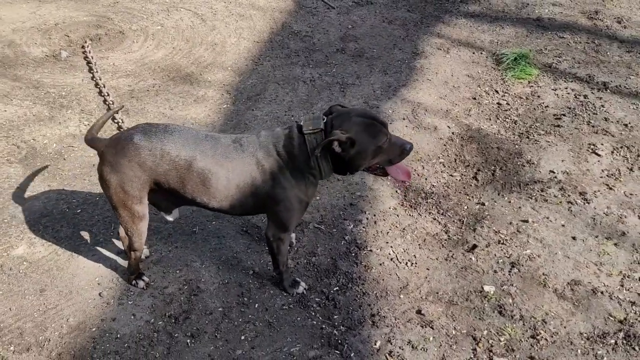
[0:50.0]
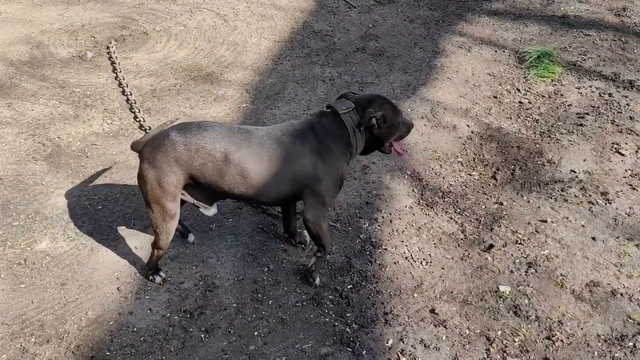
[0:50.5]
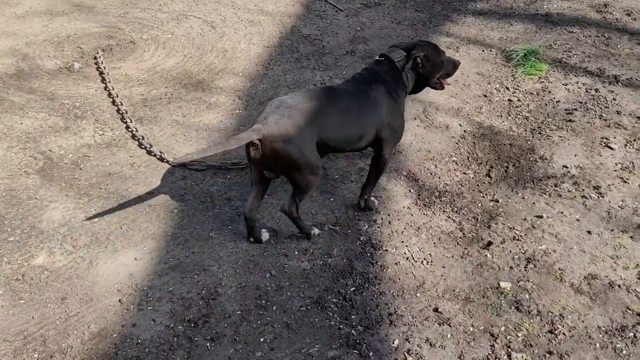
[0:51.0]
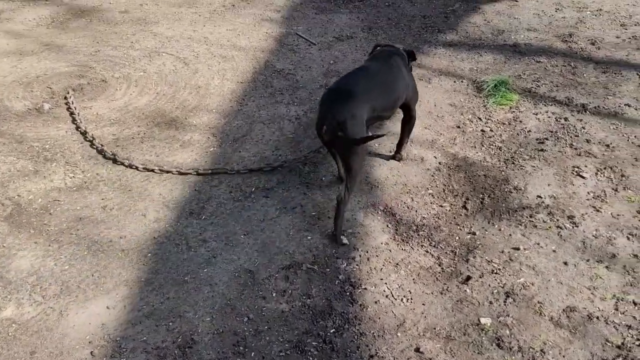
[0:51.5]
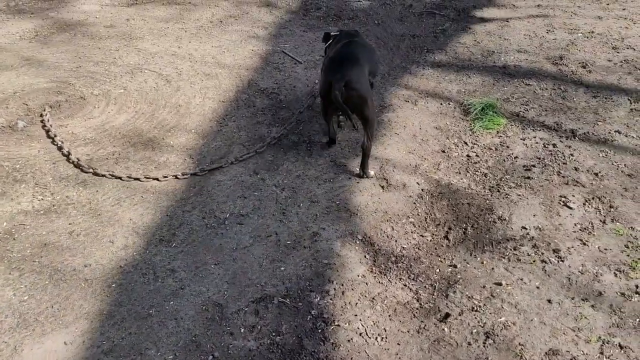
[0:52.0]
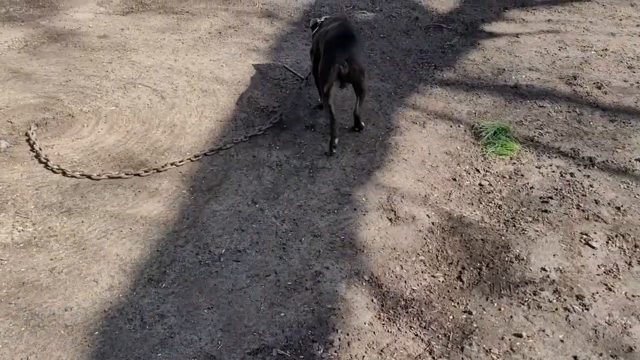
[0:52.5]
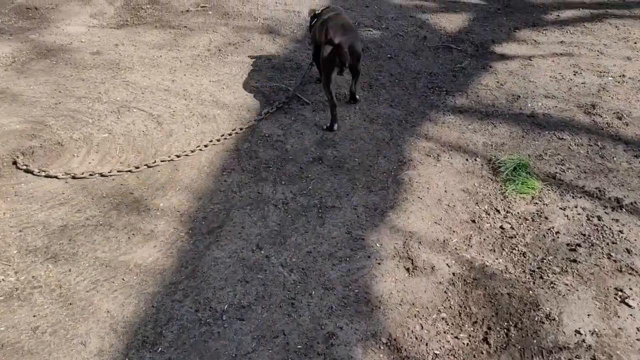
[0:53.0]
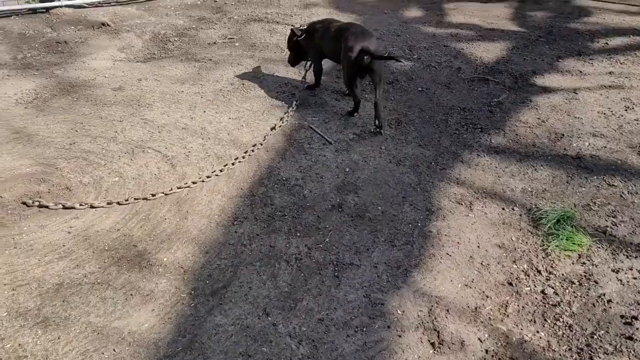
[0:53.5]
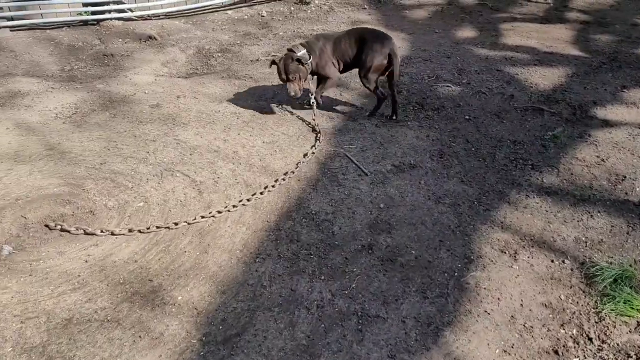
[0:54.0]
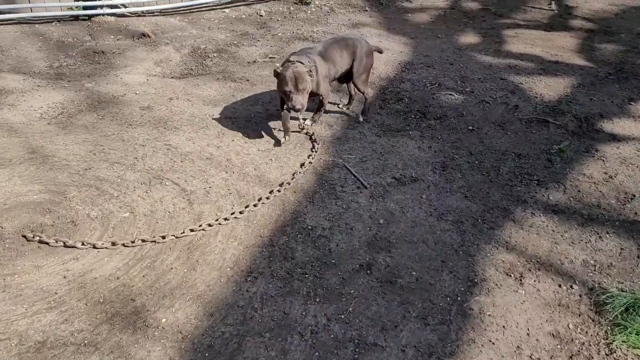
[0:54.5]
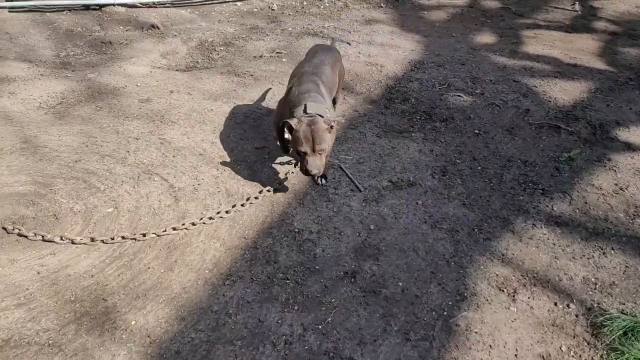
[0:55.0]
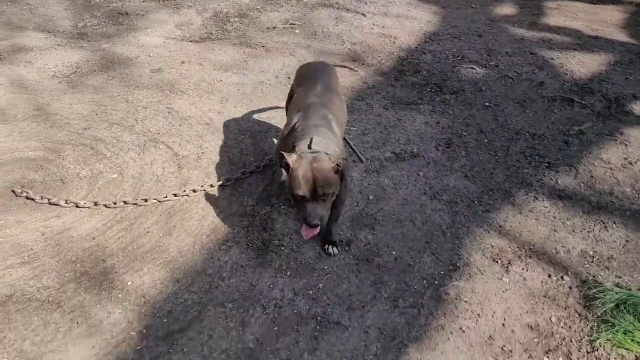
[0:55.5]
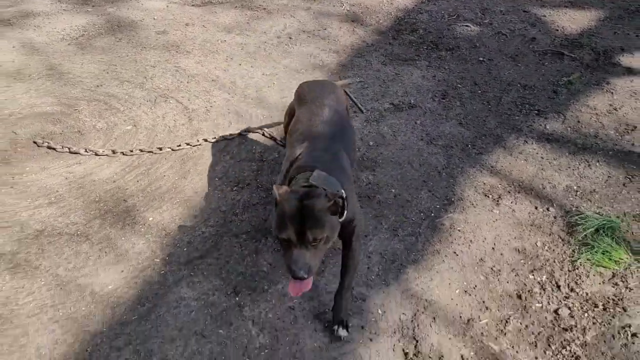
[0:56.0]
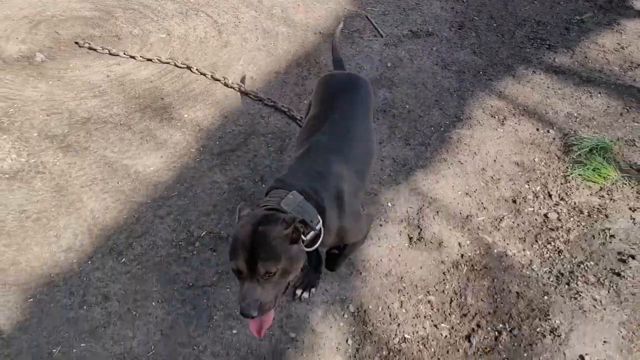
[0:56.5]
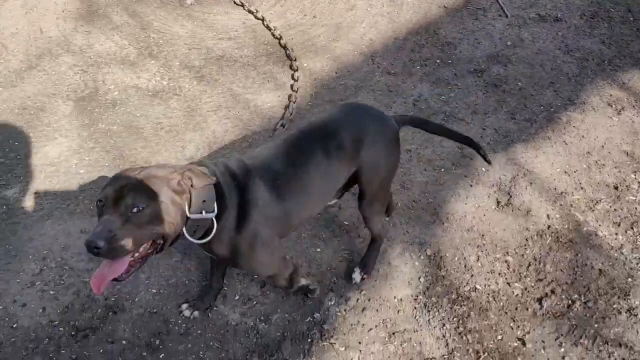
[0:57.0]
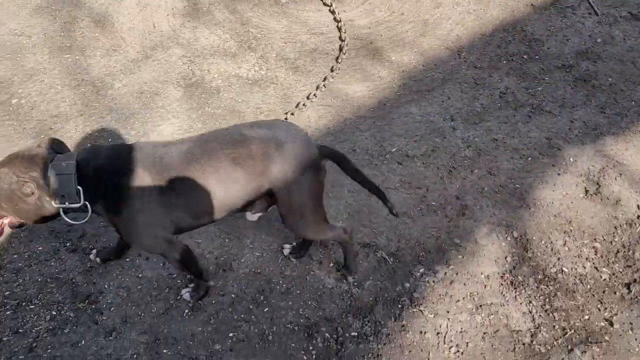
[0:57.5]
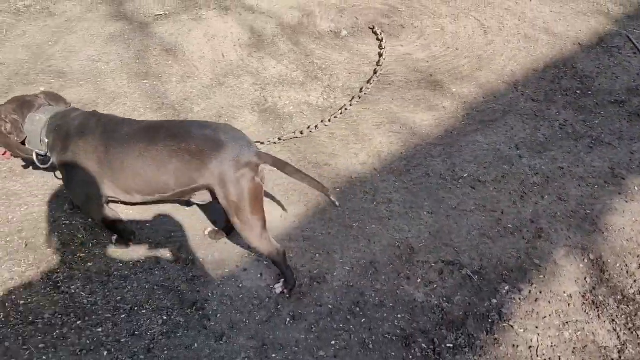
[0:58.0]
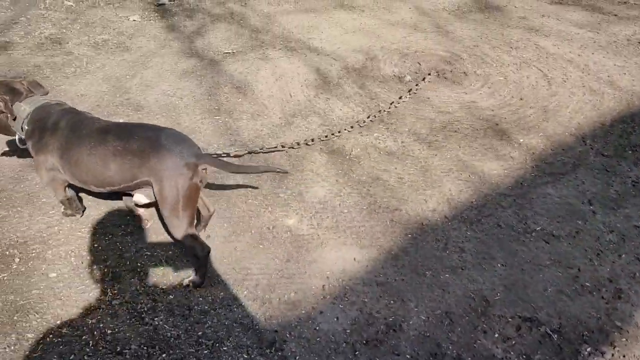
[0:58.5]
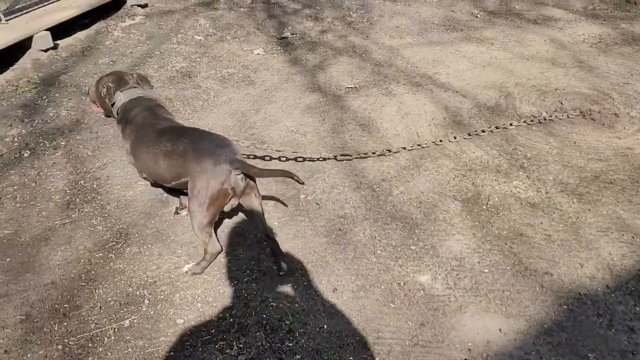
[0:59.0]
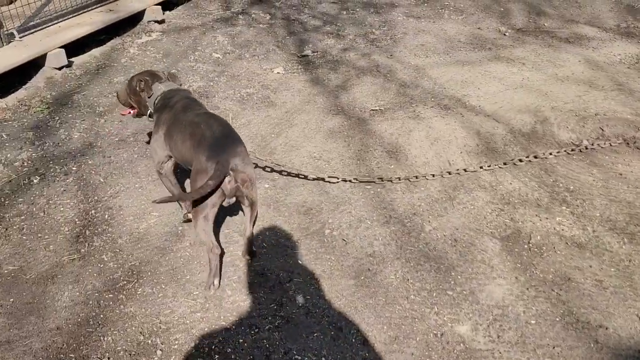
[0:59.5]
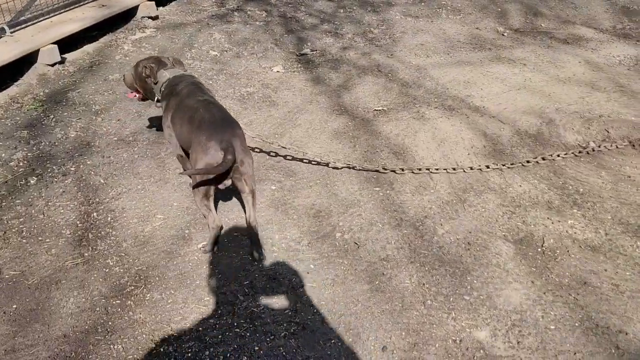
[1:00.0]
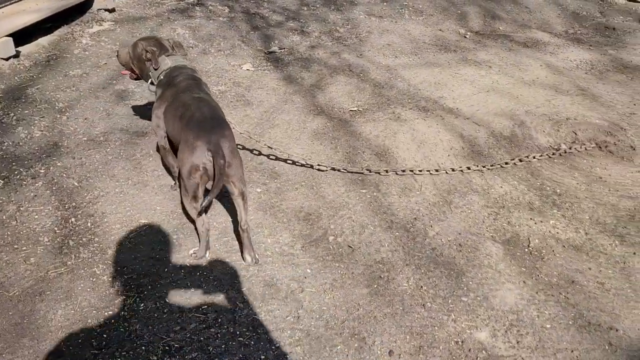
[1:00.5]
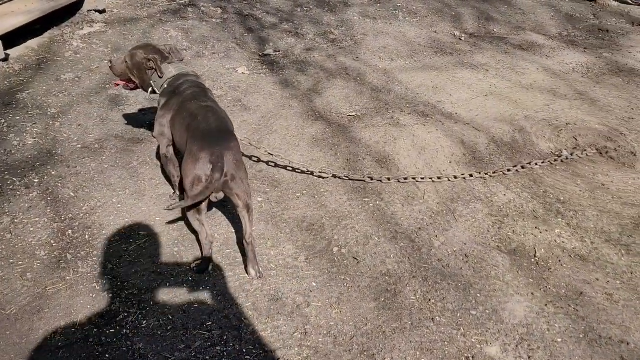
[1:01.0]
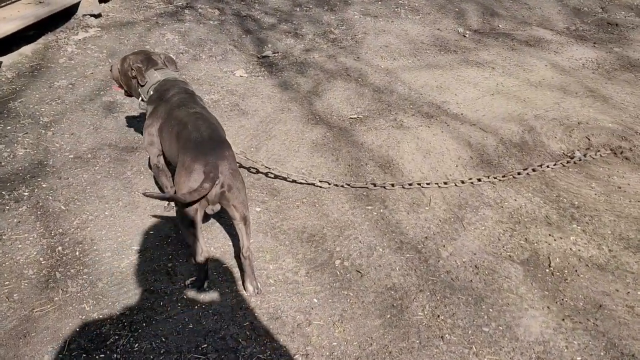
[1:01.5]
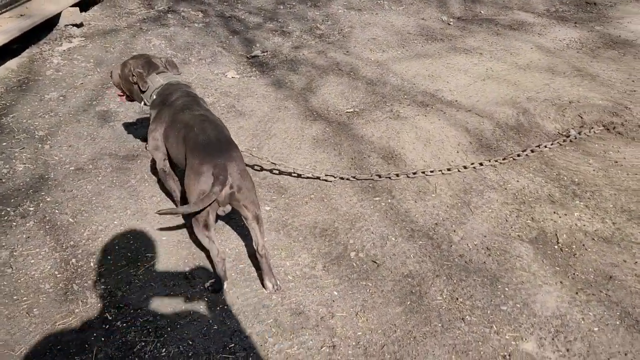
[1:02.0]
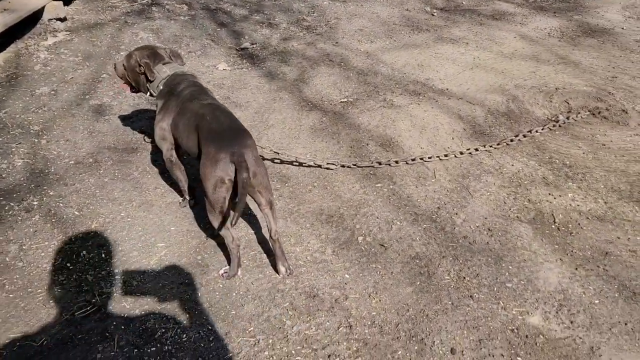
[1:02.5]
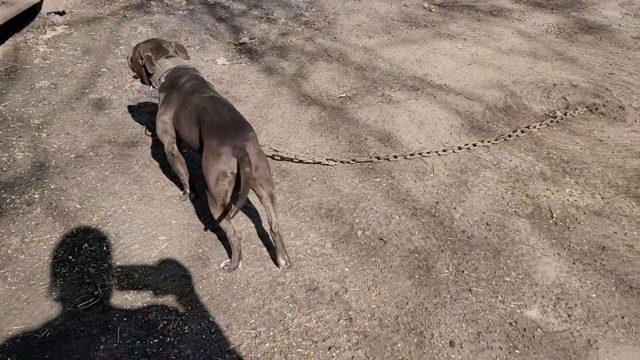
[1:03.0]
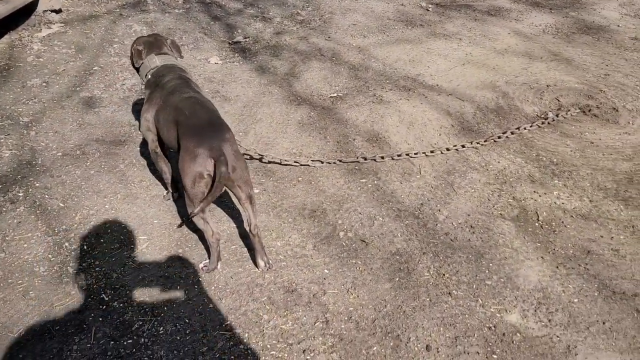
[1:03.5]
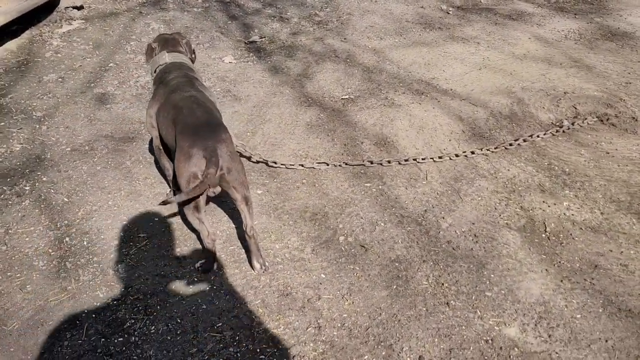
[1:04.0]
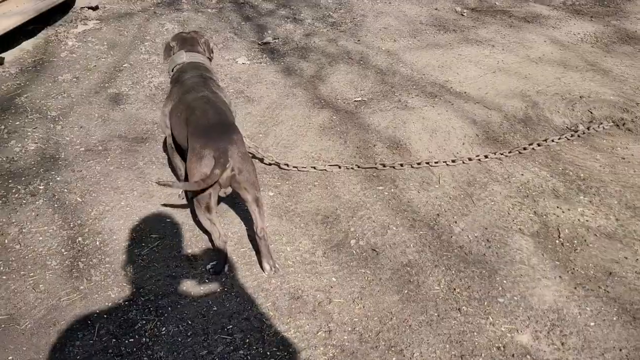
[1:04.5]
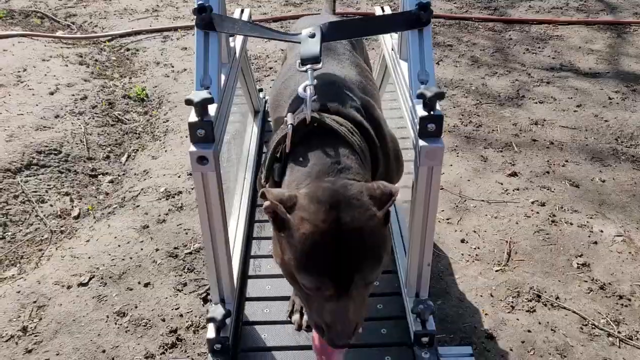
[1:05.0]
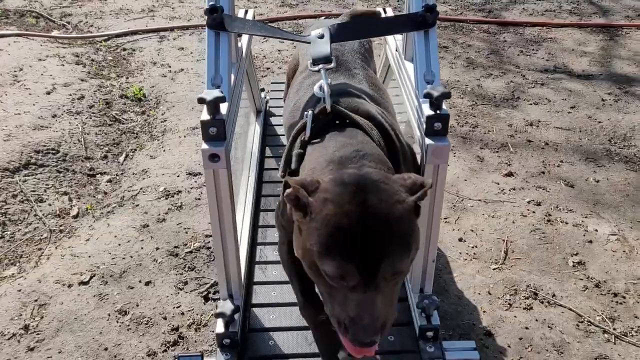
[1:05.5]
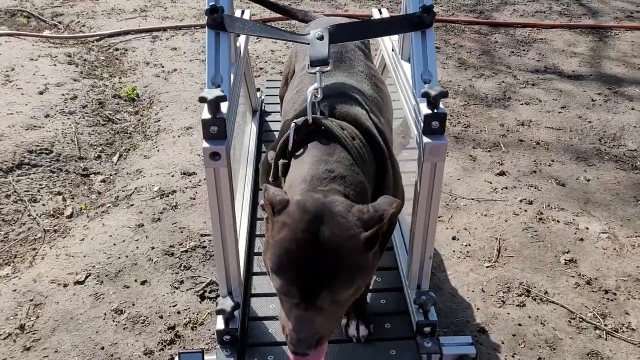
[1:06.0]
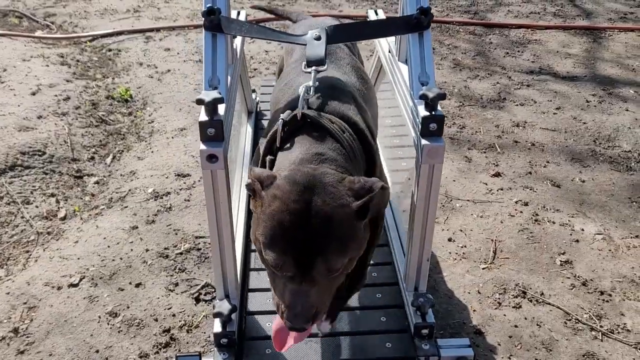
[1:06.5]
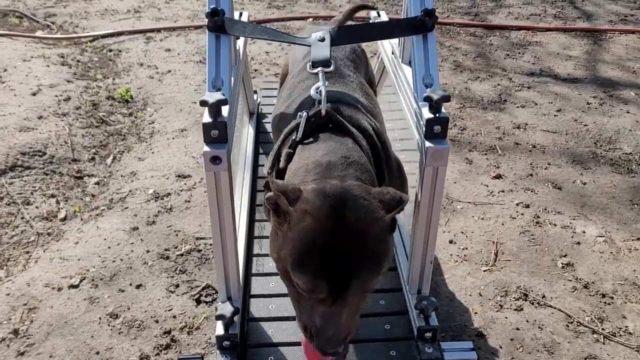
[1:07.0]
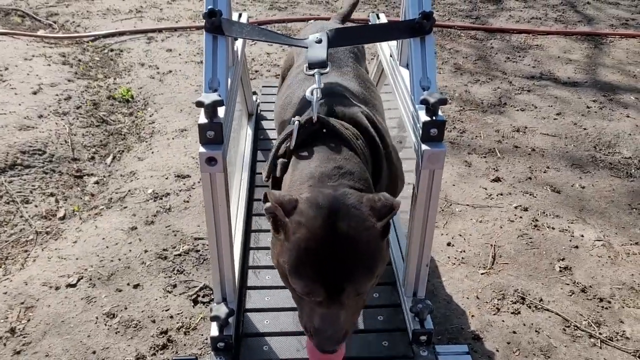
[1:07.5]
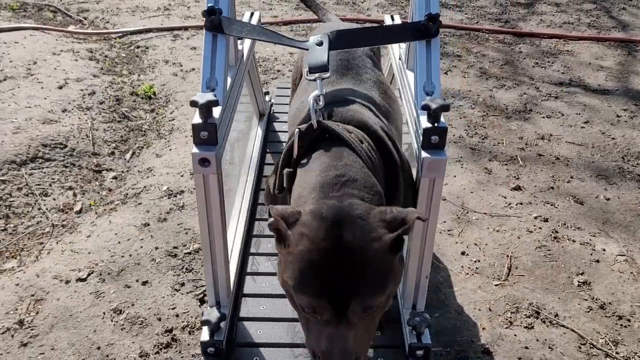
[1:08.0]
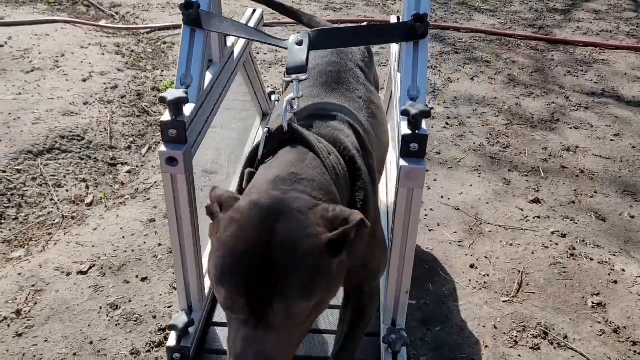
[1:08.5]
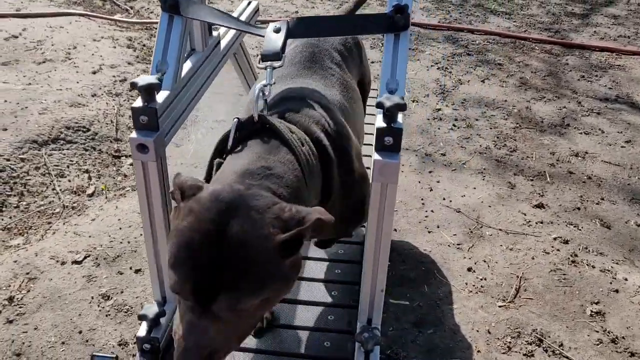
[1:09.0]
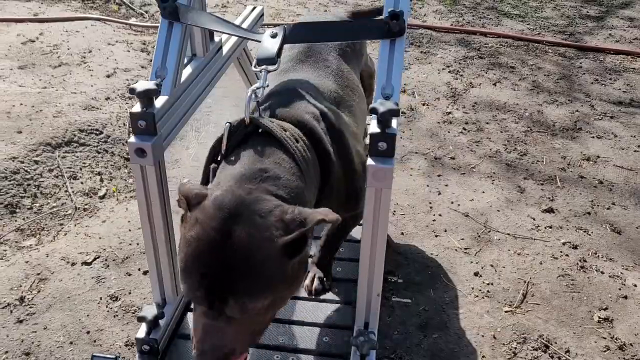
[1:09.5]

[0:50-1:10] The black dog is still wagging its tail as someone apparently greets it. It moves around and is kept in what looks like a dog treadmill, holding its position there with its tongue out. The tongue is very long.